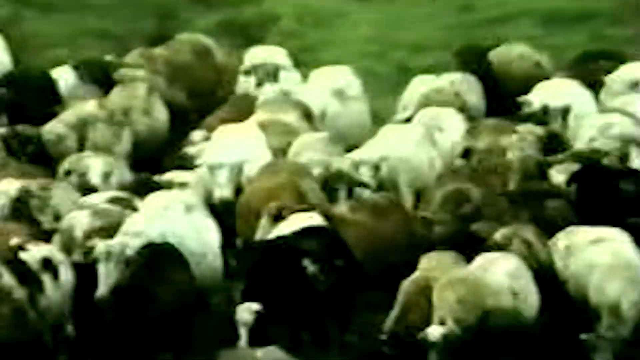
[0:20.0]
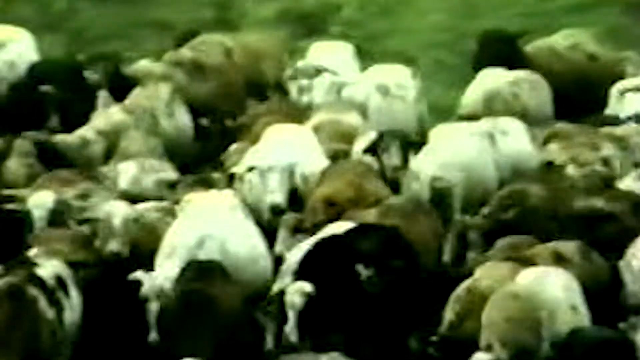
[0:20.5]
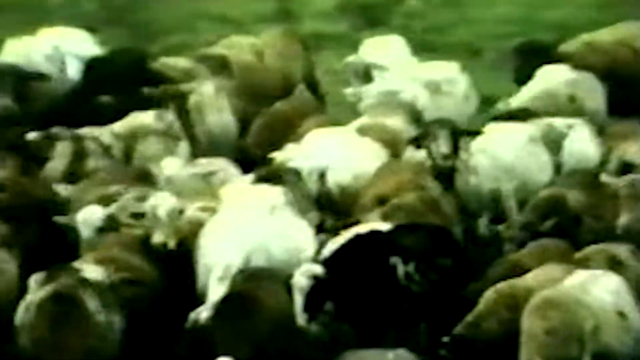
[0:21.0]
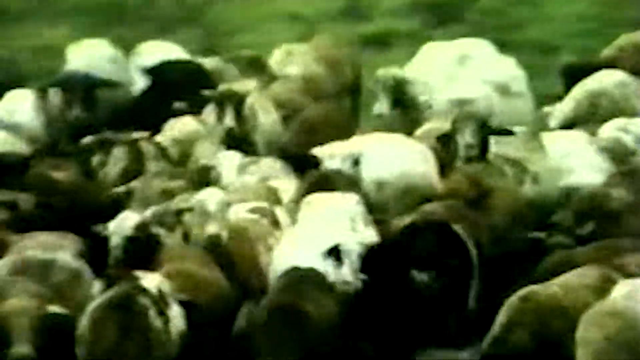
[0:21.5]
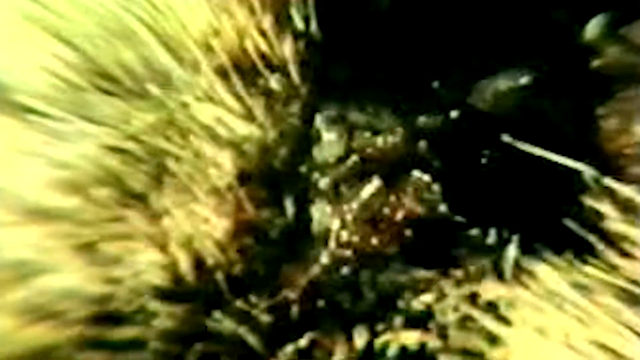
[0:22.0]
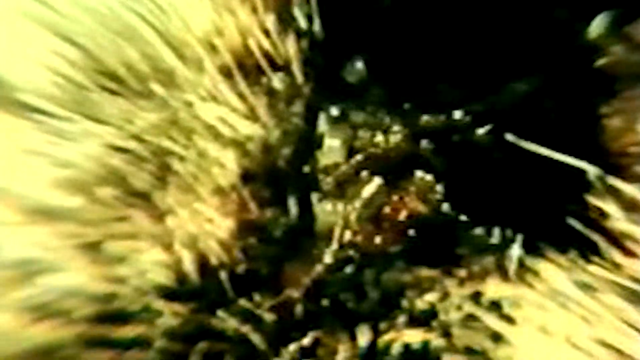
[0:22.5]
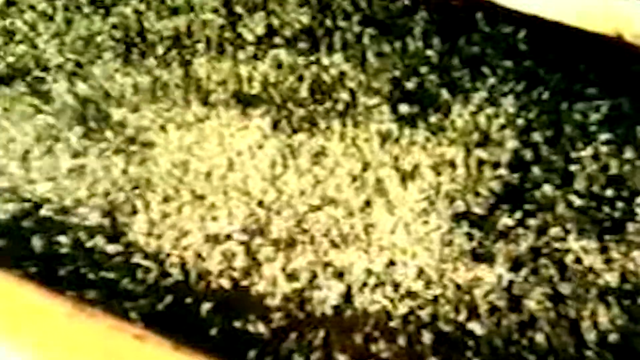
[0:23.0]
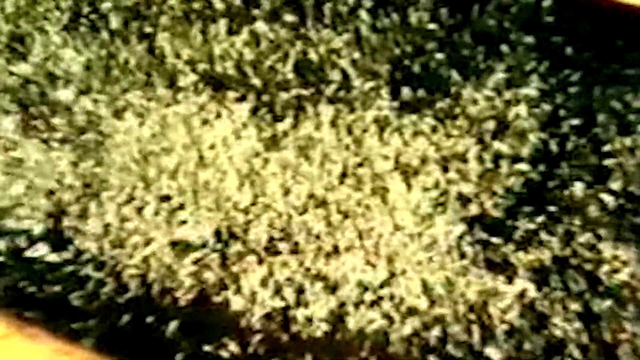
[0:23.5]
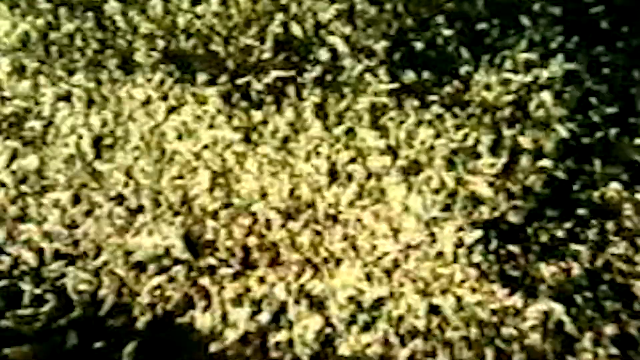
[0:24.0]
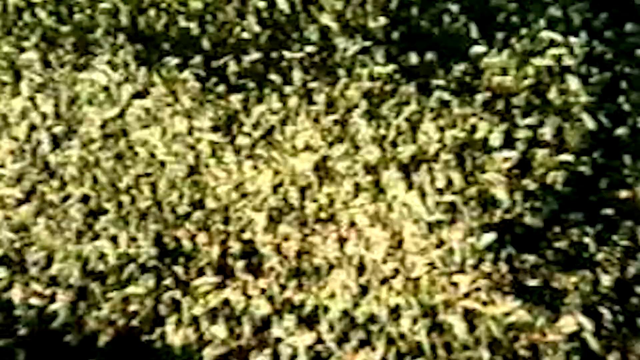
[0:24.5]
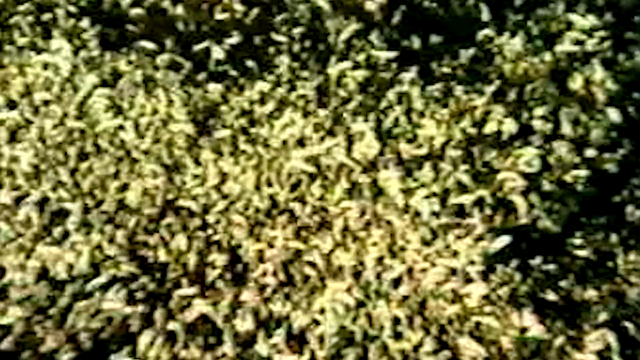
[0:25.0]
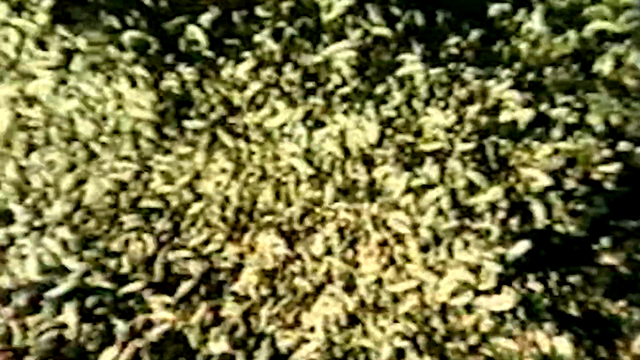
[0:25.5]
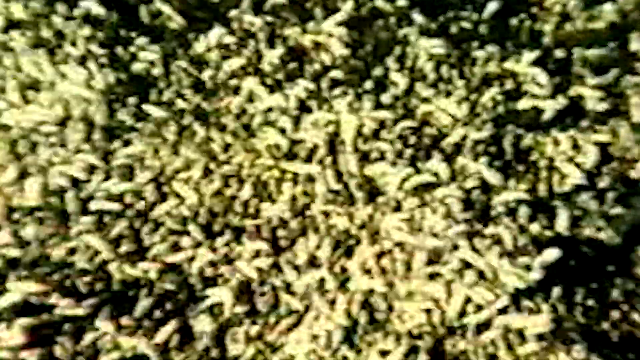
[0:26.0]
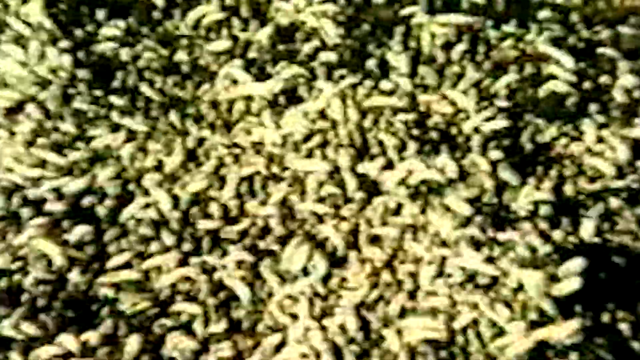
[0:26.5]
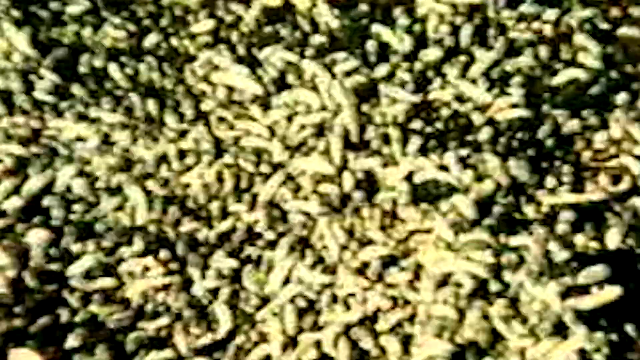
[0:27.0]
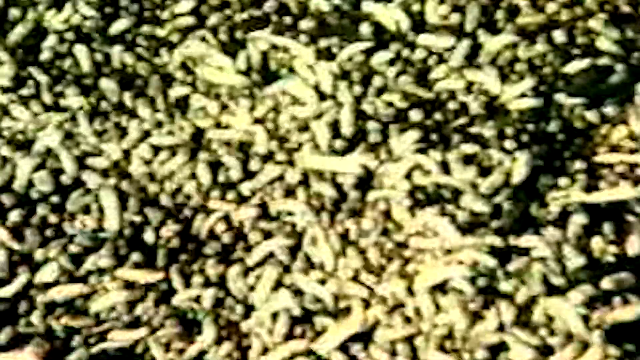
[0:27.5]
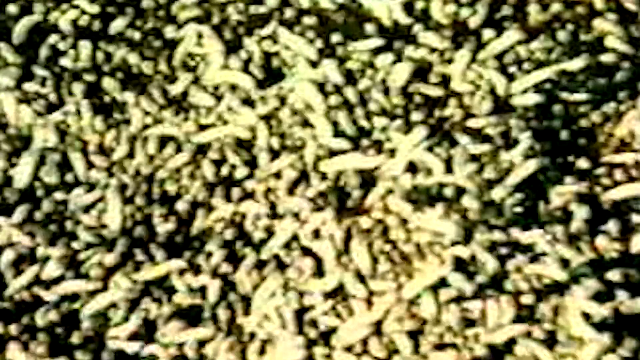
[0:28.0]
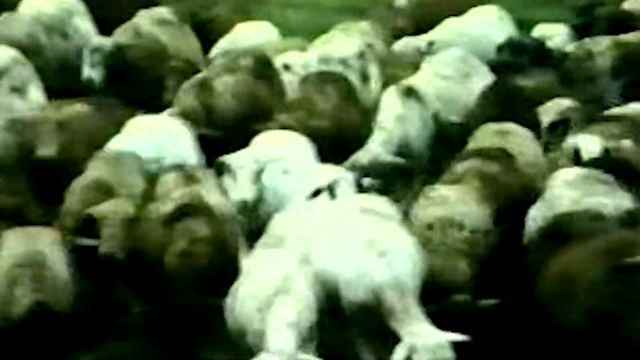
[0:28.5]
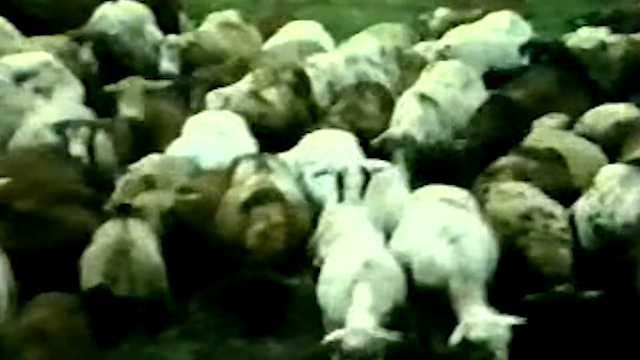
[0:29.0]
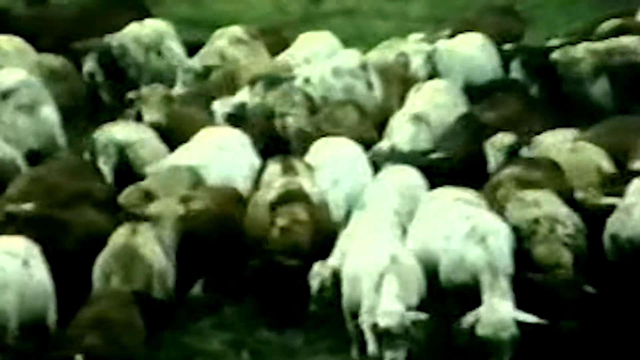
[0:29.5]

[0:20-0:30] Numerous cows in a pasture are grouped into a herd. The film then moves to a very blurry black-and-white image of what appear to be hundreds of thousands of insects or bugs swarmed together and moving around, and the video zooms in on these structures. It then returns to the same shot of the cows huddled together in the pasture and moving around. These are very old-style clips: the cow footage has a very vintage look with very muted greens, whites and blacks, while the insect images are more cartoon-like structures.